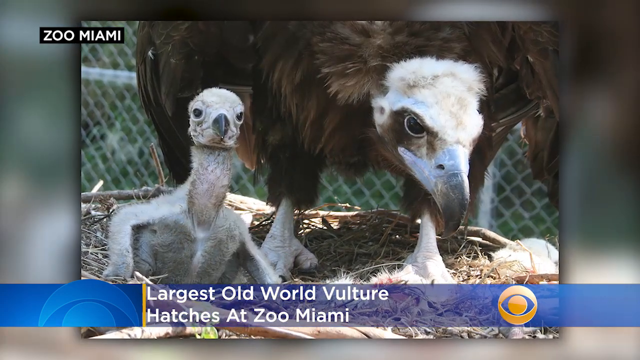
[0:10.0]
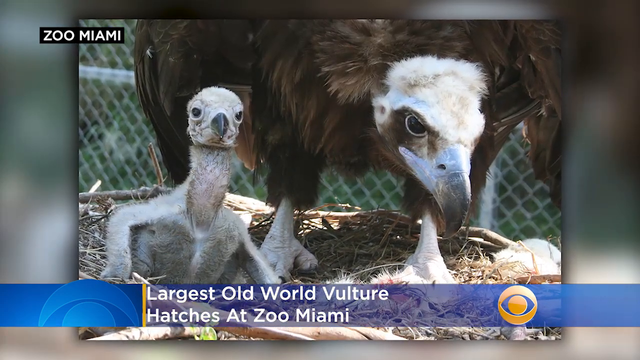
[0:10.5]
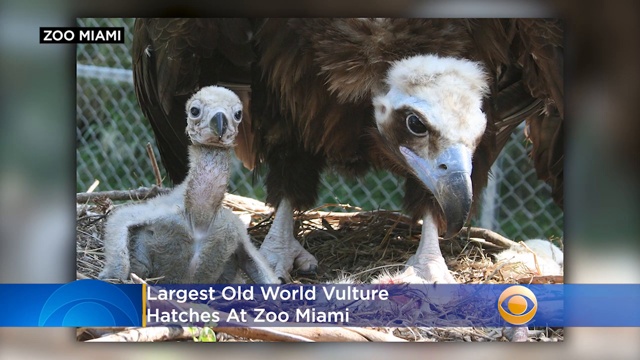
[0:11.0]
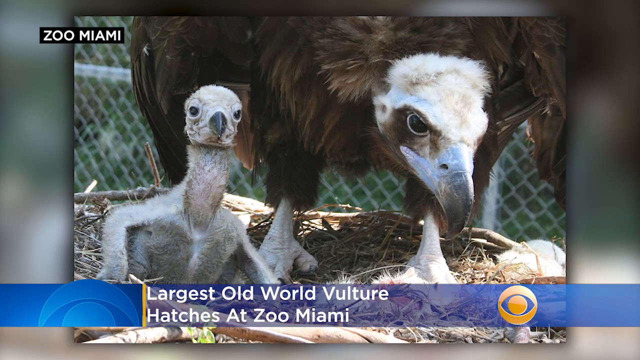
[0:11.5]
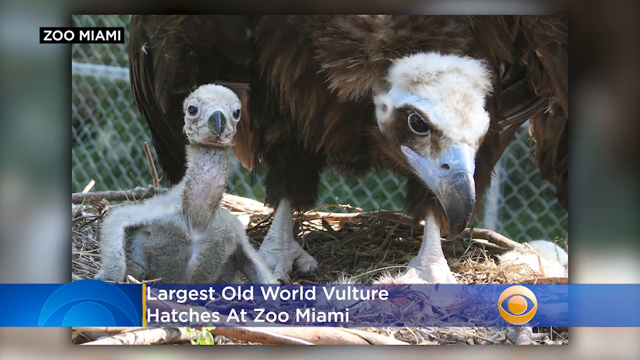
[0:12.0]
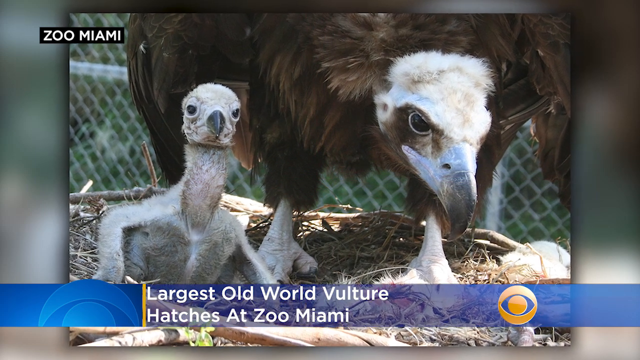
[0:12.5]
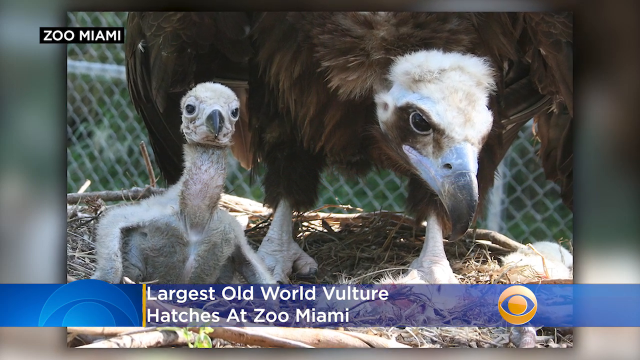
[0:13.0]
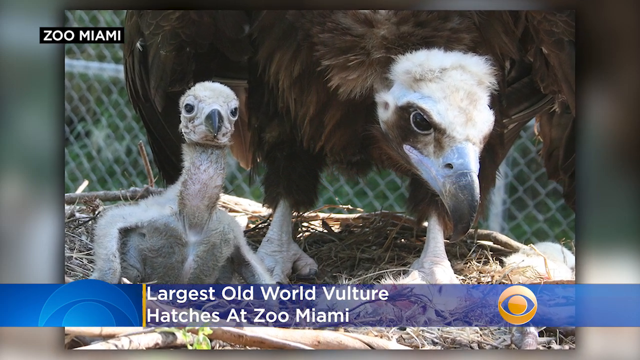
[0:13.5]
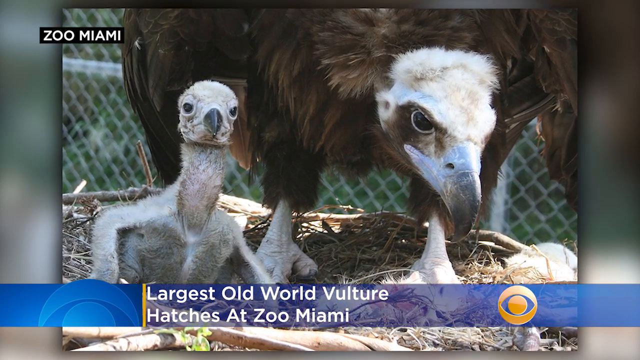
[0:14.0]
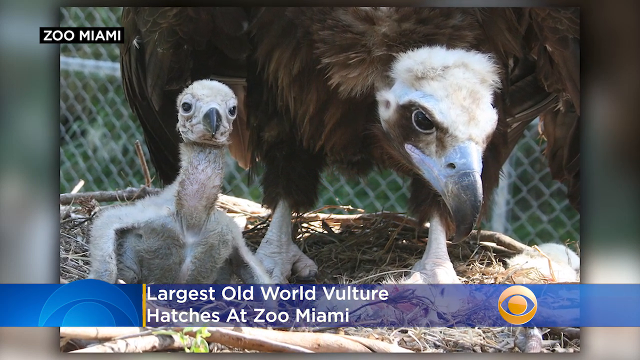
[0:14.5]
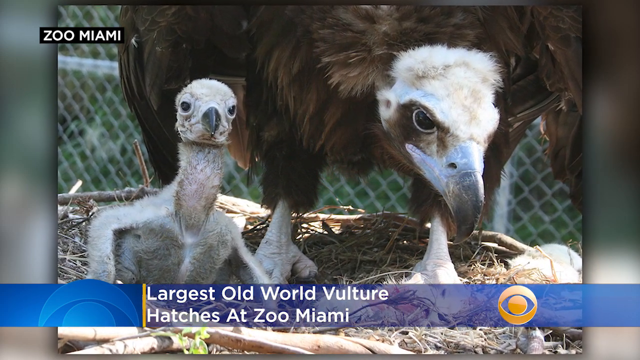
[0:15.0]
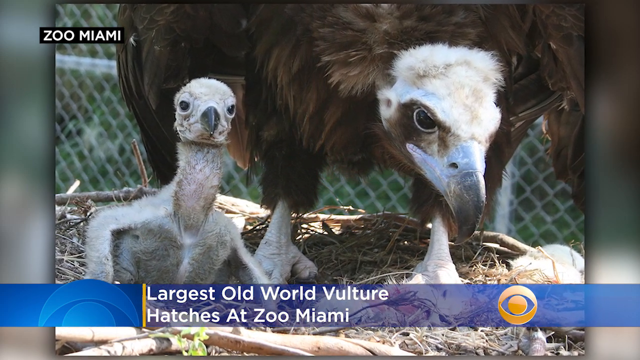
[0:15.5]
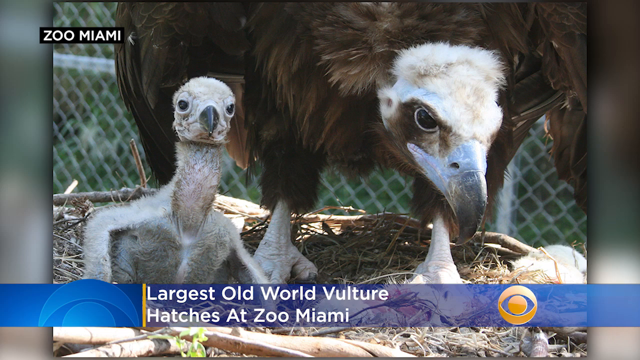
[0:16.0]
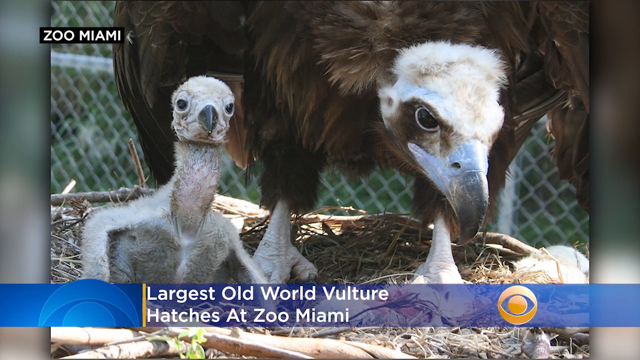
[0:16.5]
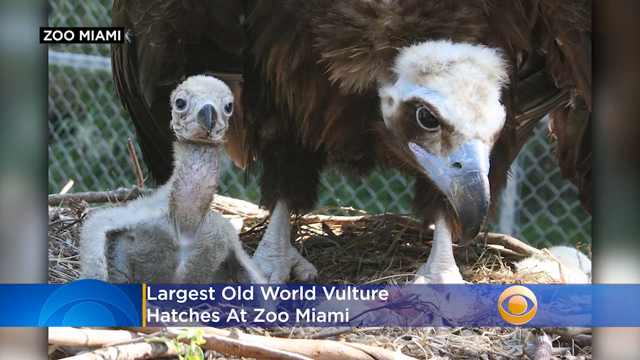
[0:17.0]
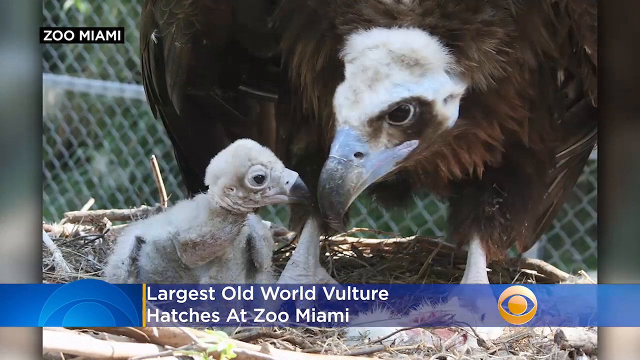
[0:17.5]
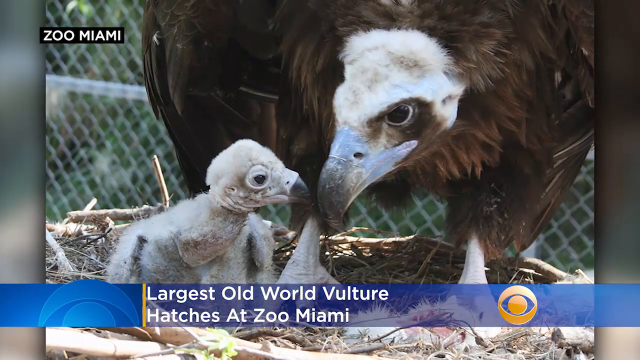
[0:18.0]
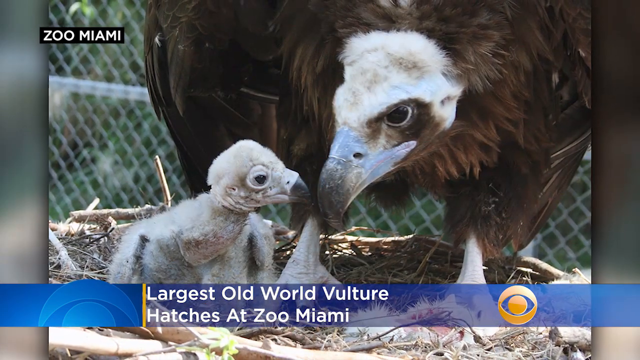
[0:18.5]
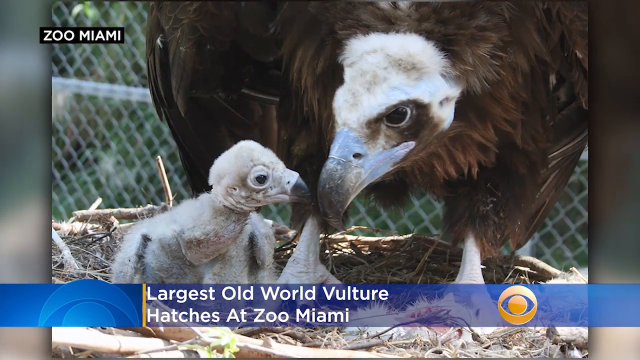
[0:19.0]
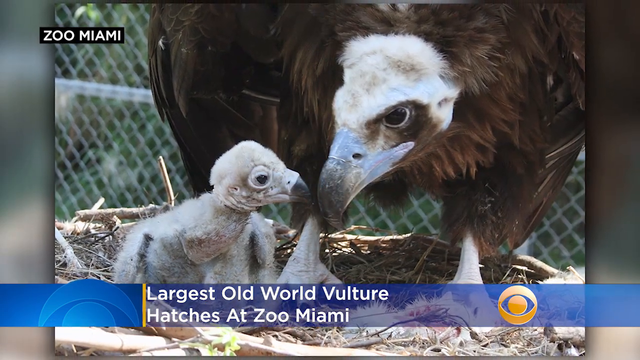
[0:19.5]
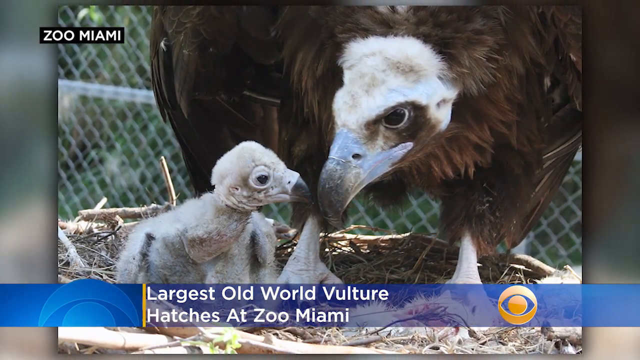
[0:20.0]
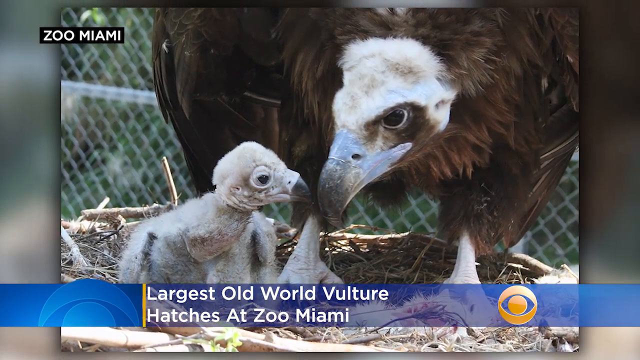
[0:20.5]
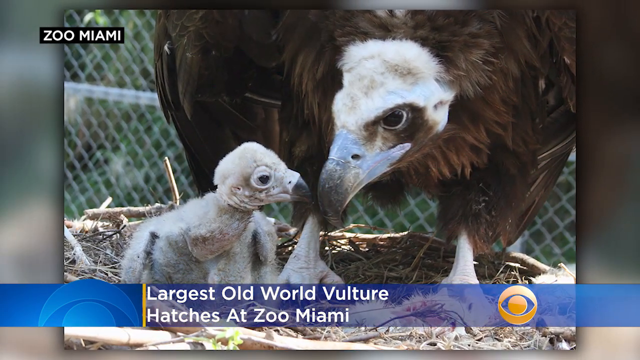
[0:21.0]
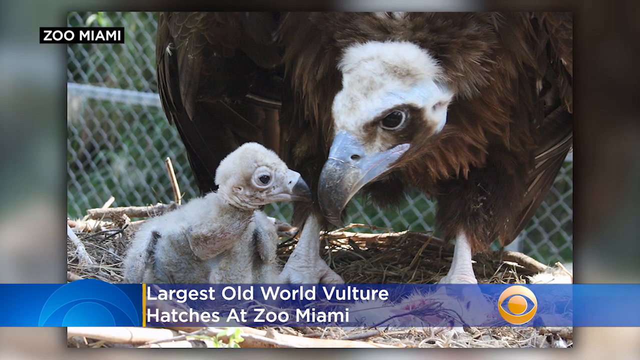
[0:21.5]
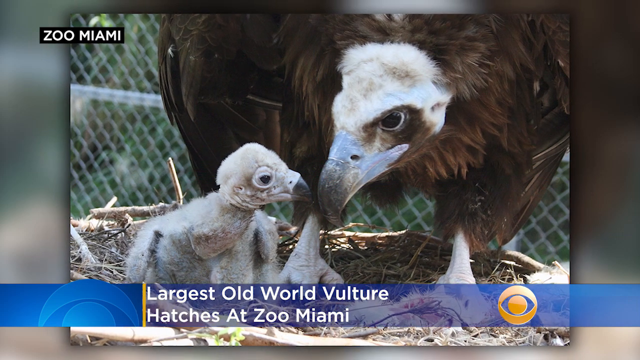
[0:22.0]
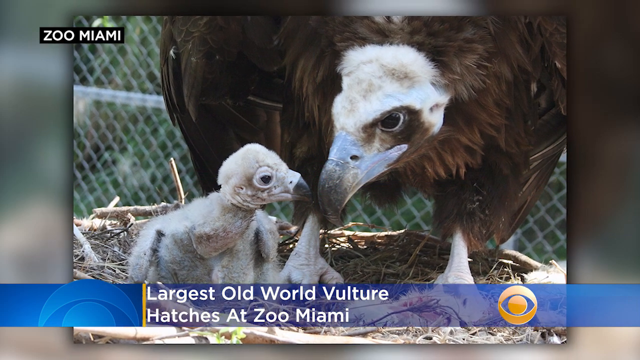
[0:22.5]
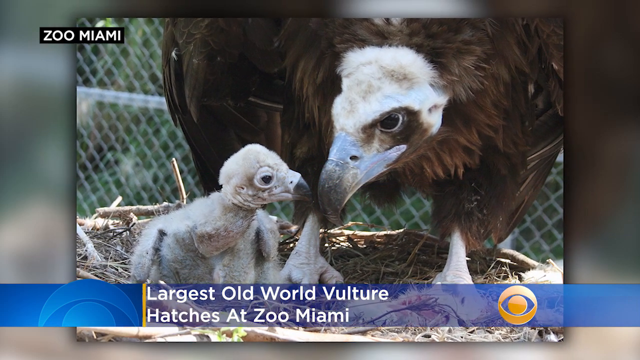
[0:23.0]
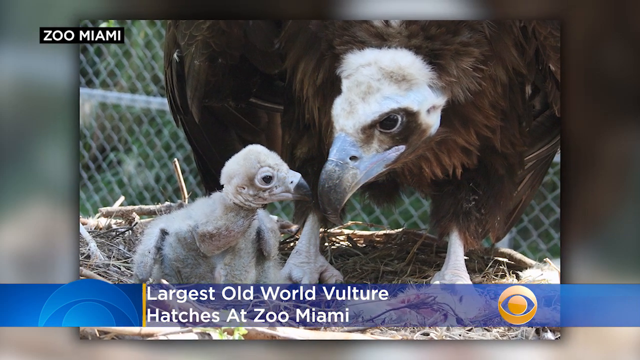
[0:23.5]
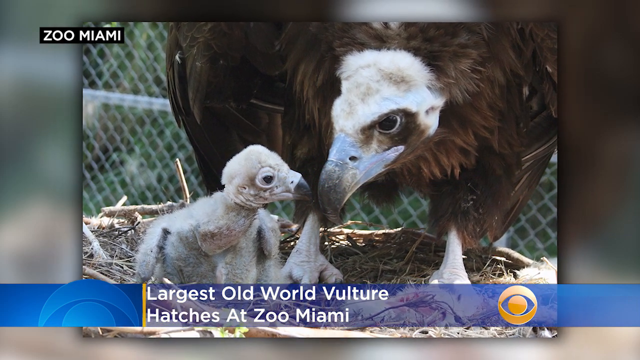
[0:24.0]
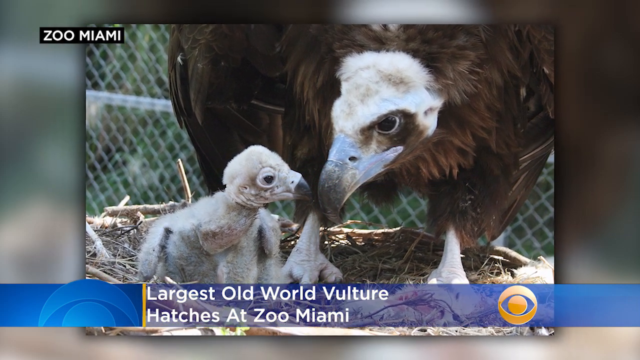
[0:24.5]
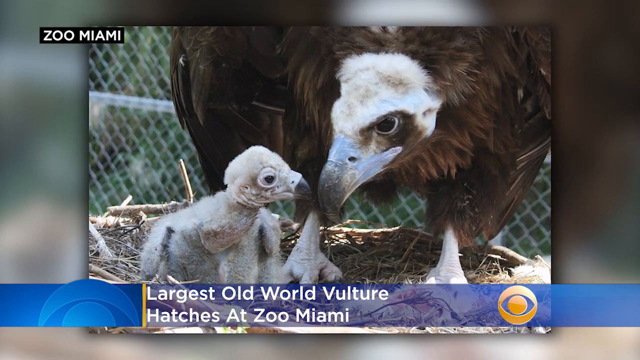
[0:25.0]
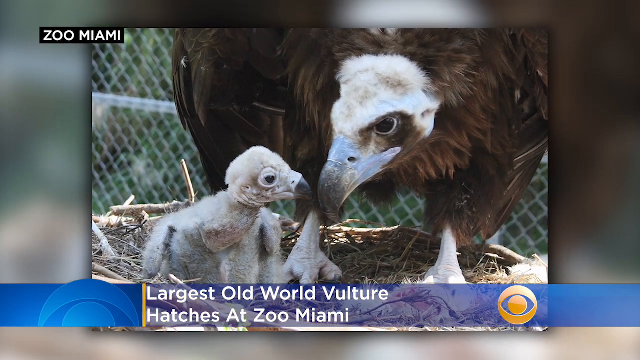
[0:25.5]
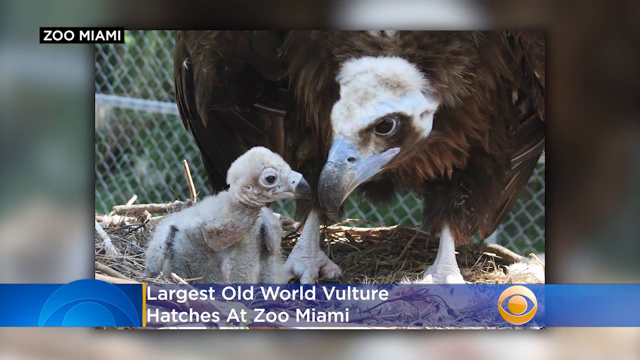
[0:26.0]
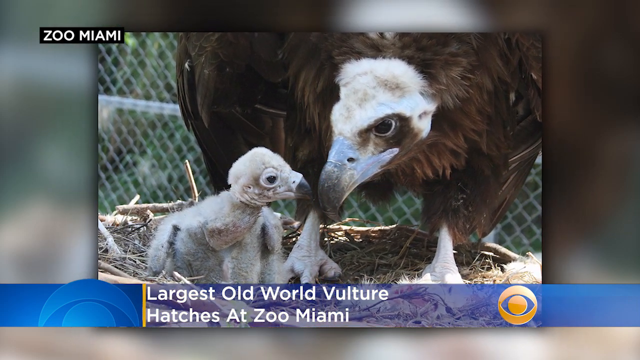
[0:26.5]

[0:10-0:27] The lower-third graphic, a blue strip across the bottom of the screen, says "Largest old world vulture hatches at Zoo Miami," with a golden CBS logo on its far right. The image shows a large bird with brown feathers and a blue and black beak. Beneath the wing of the large bird is a baby bird with no feathers, covered in white fuzz. The image slowly zooms in and becomes larger. The baby bird, only around six inches tall, looks straight forward, and the full-grown bird looks in the same direction; the adult is clearly many times larger, with the baby roughly the size of one of the full-grown bird's legs. A fence is visible in the background, indicating they are within an enclosure that appears to be part of Zoo Miami.